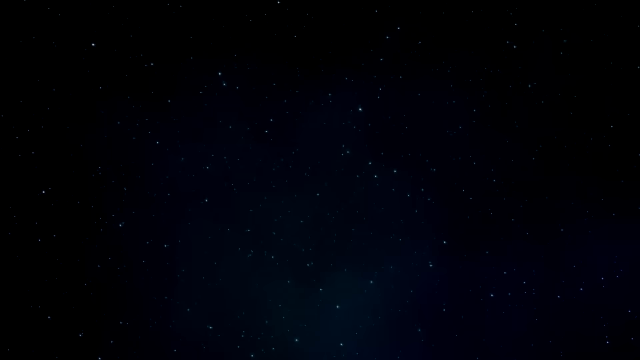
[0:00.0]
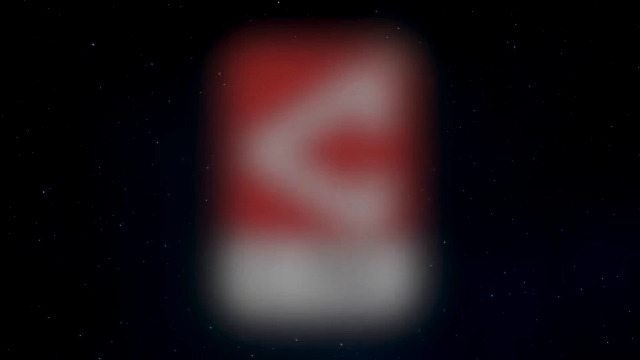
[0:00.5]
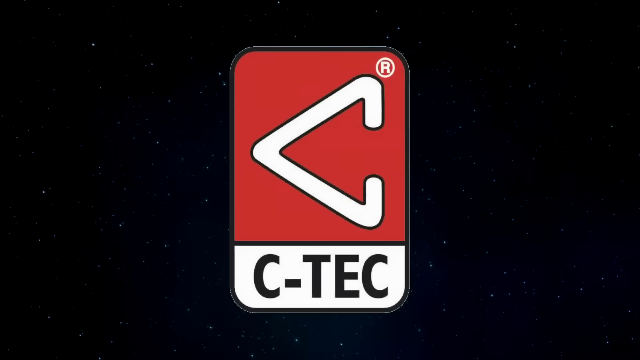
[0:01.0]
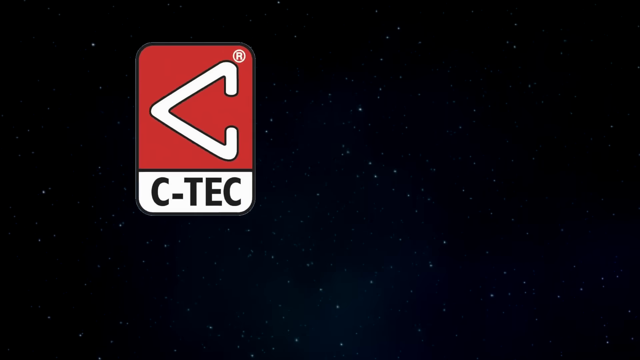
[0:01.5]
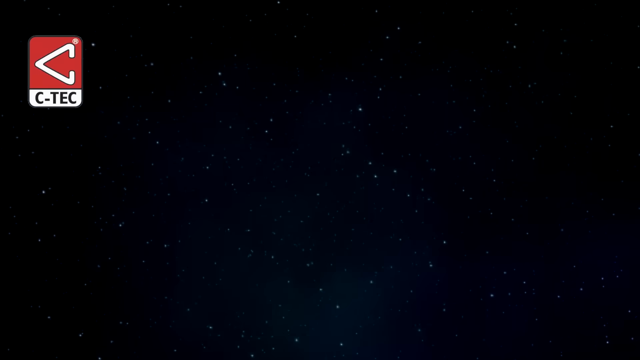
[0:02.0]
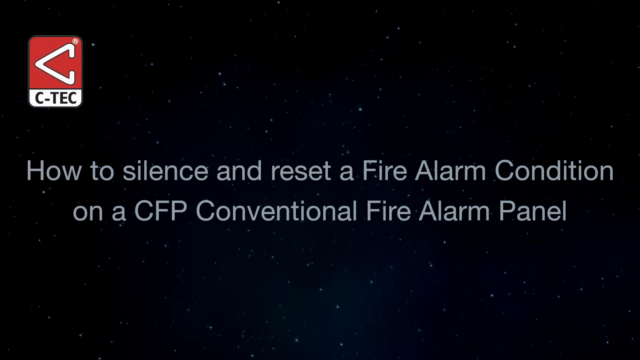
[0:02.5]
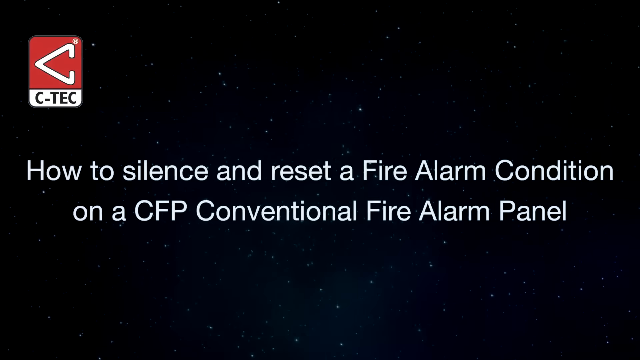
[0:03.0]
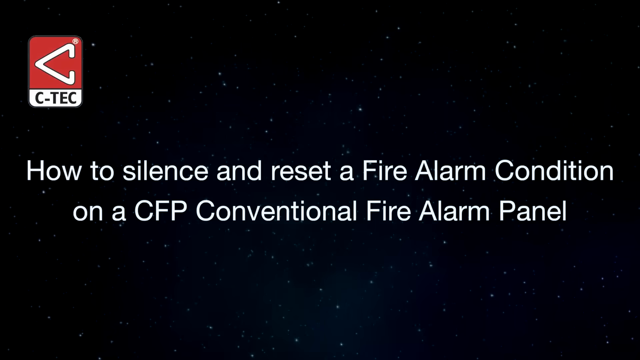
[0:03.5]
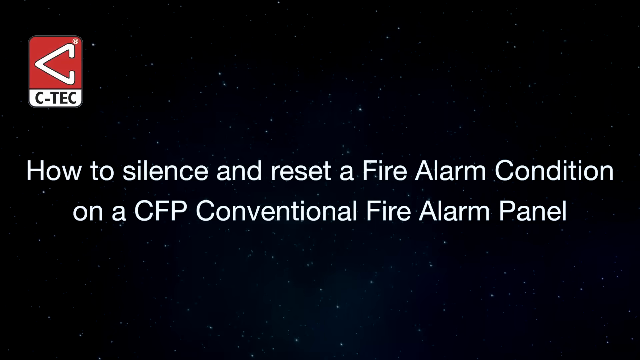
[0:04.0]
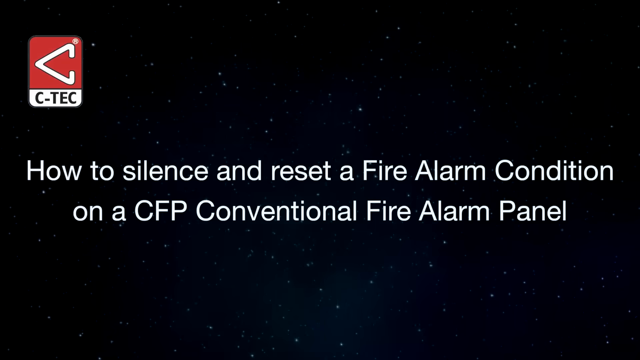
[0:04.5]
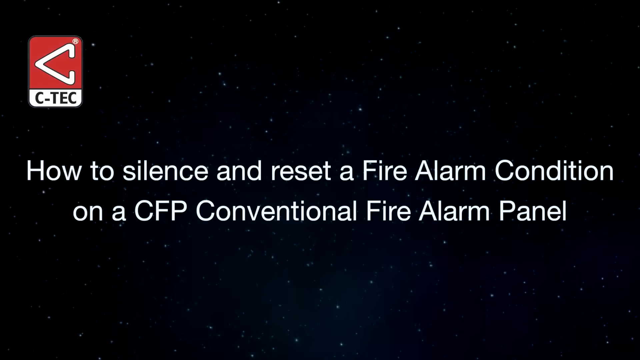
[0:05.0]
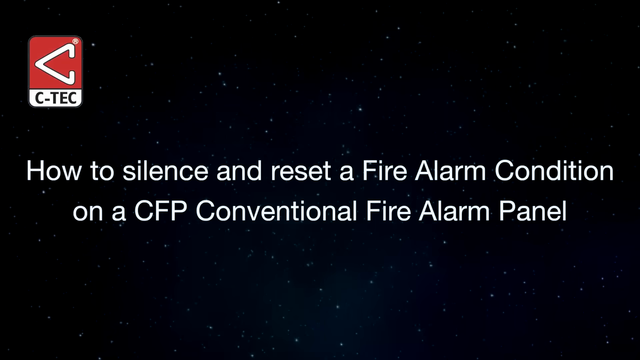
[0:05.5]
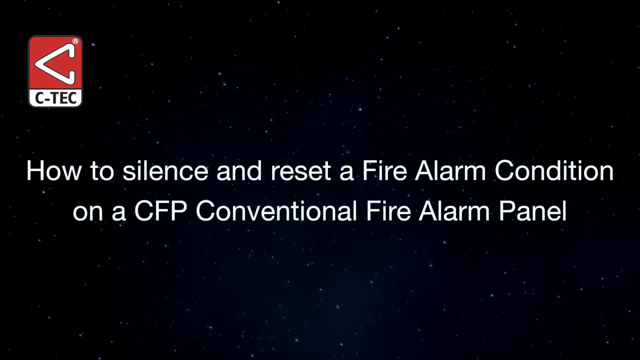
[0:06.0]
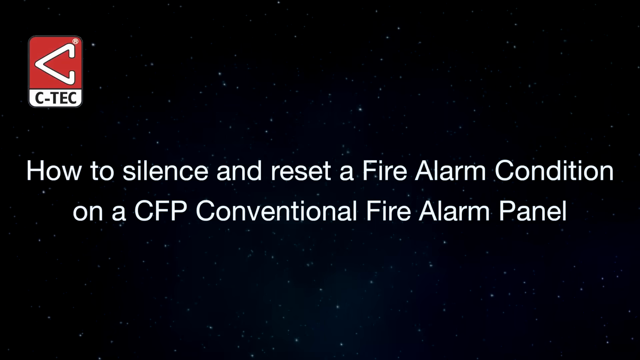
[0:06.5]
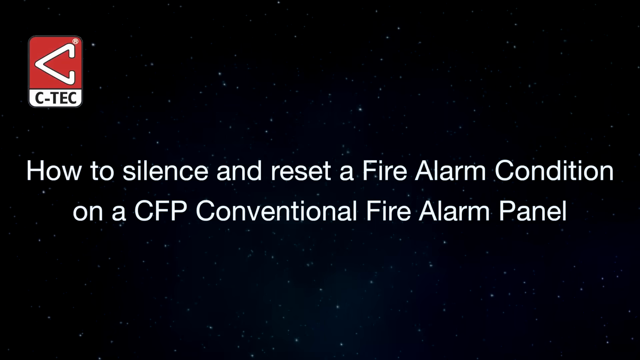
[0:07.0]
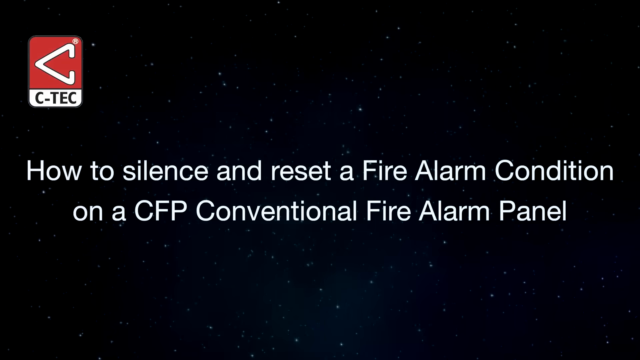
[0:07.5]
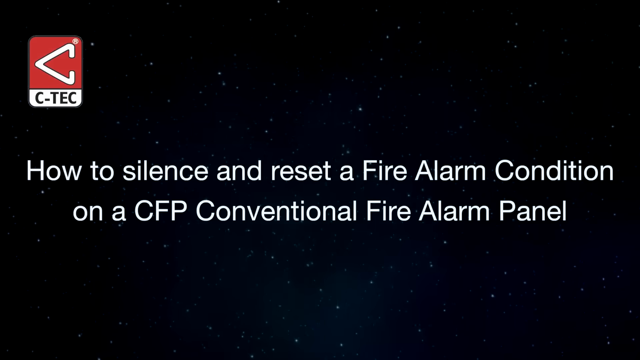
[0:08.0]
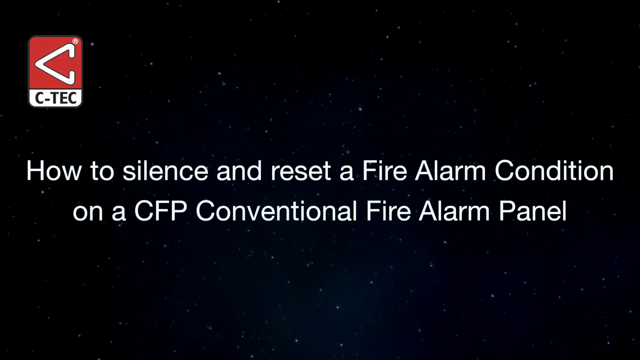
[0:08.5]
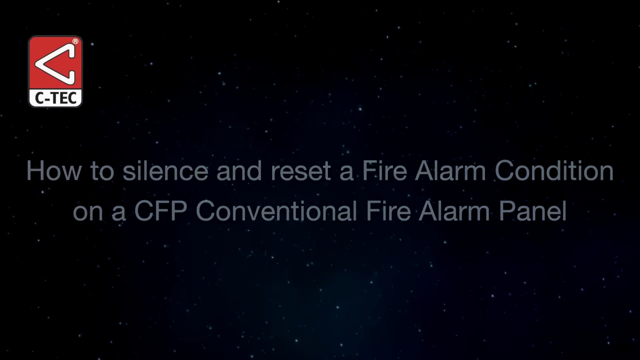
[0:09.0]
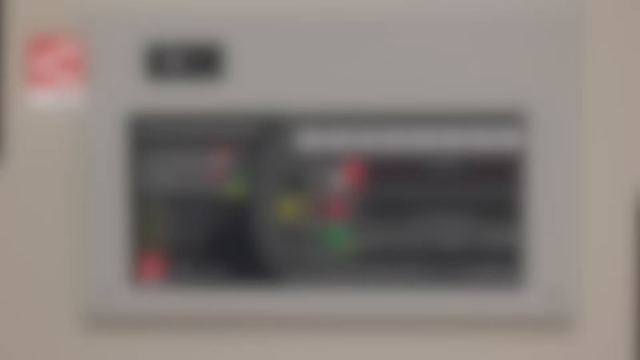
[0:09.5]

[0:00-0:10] The video opens on a black screen before the CTEK logo appears: a red background with a white sideways V, with "CTEK" underneath in black text. White text across the screen then reads "how to silence and reset a fire alarm condition on a CFP conventional fire alarm panel", centred in the middle of the screen, with nothing else but the white text, the logo in the top left and the black background. A new video then appears showing the fire alarm control panel with instructions next to it.